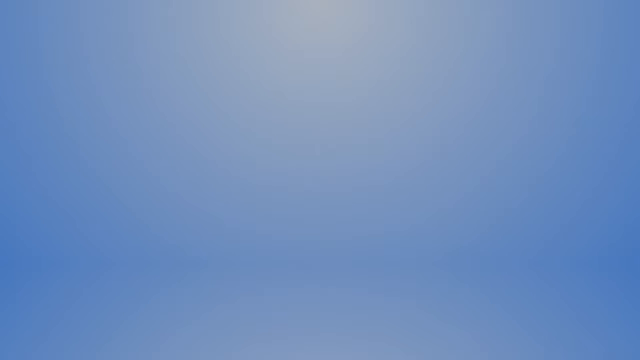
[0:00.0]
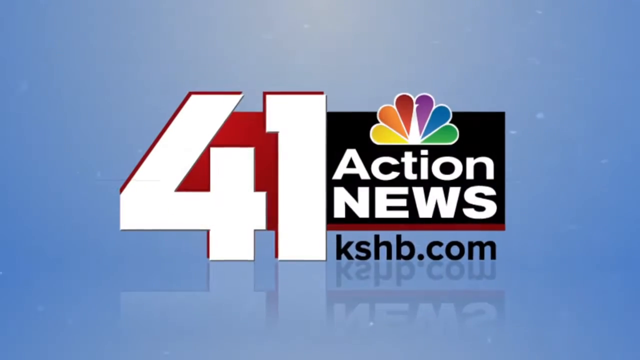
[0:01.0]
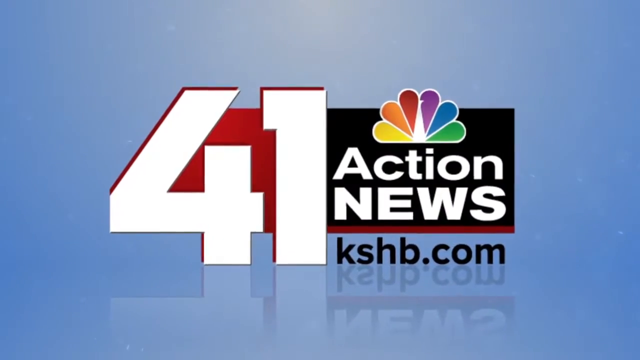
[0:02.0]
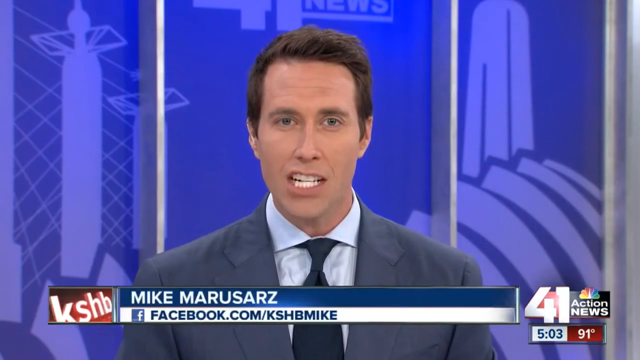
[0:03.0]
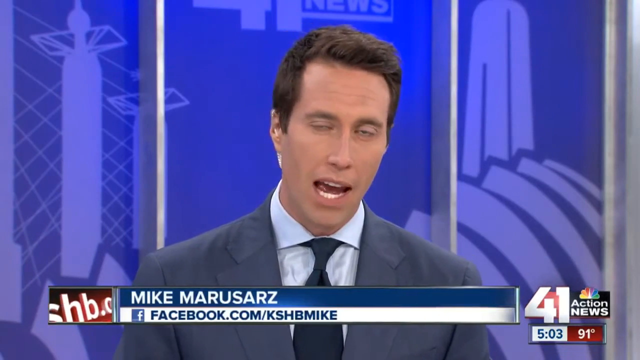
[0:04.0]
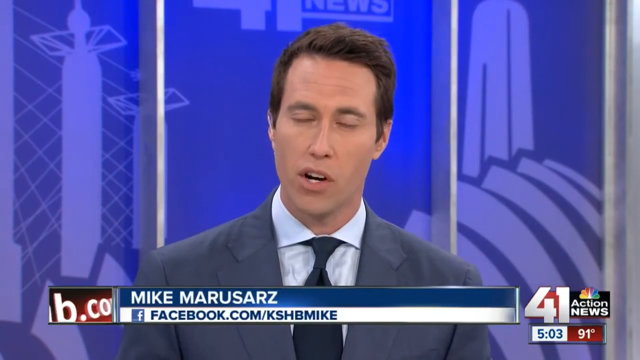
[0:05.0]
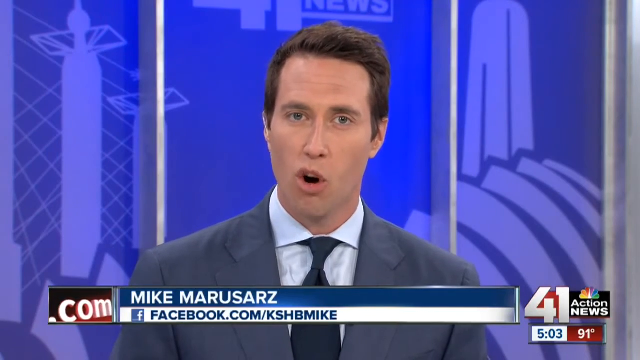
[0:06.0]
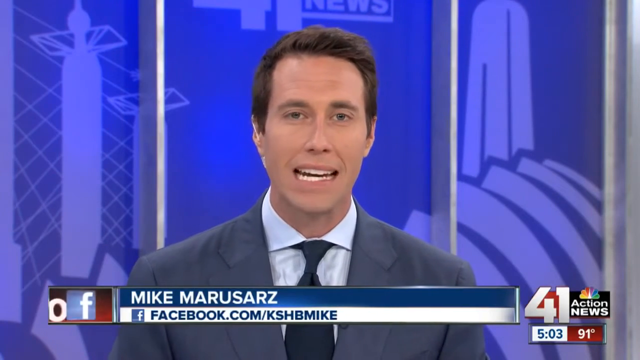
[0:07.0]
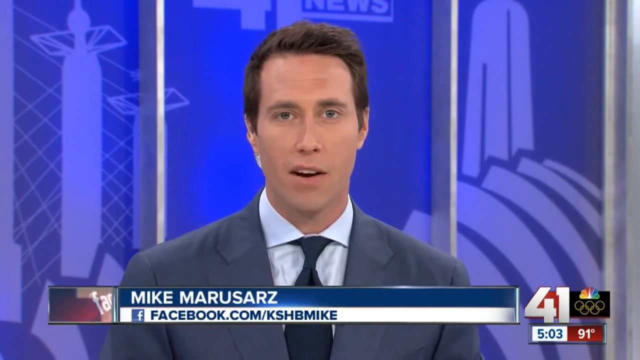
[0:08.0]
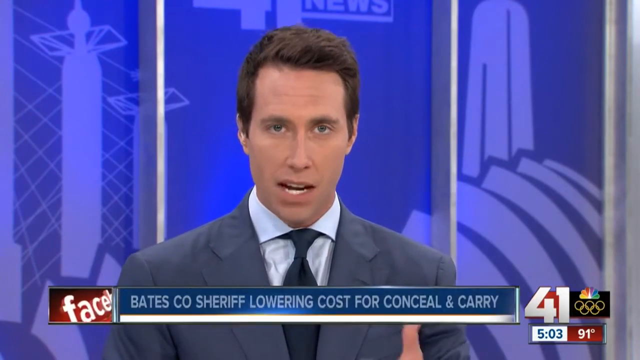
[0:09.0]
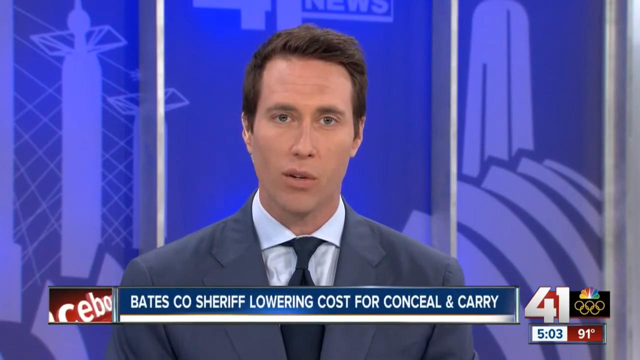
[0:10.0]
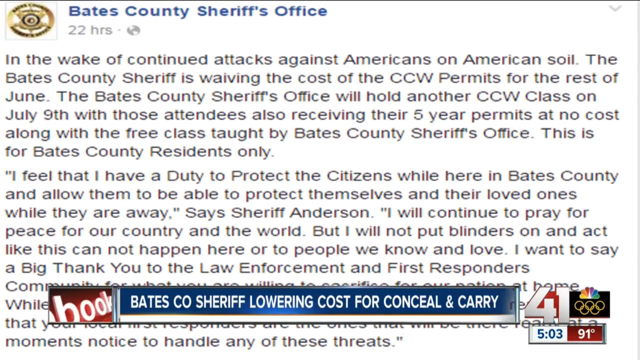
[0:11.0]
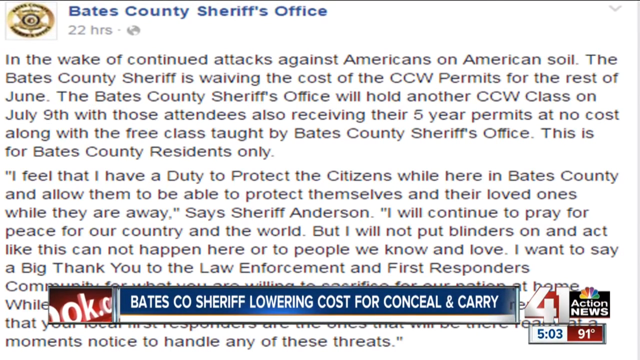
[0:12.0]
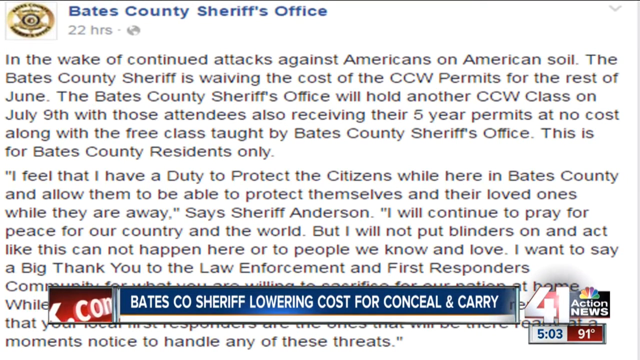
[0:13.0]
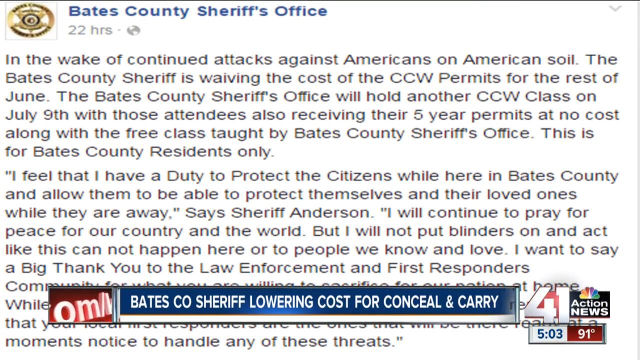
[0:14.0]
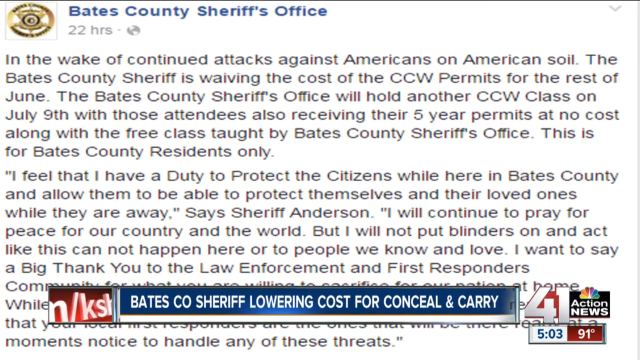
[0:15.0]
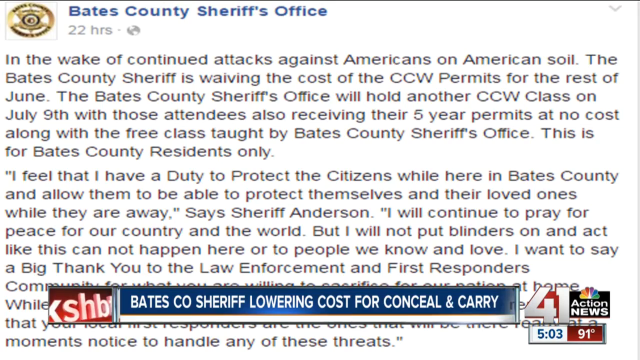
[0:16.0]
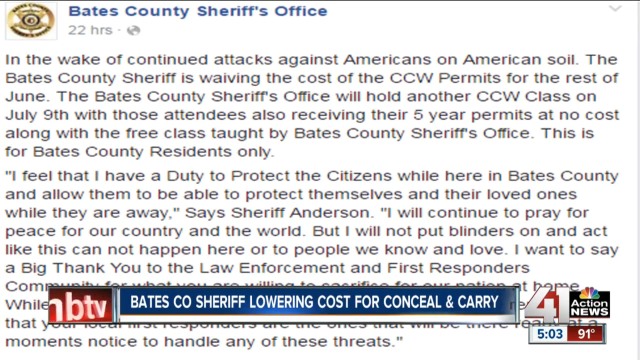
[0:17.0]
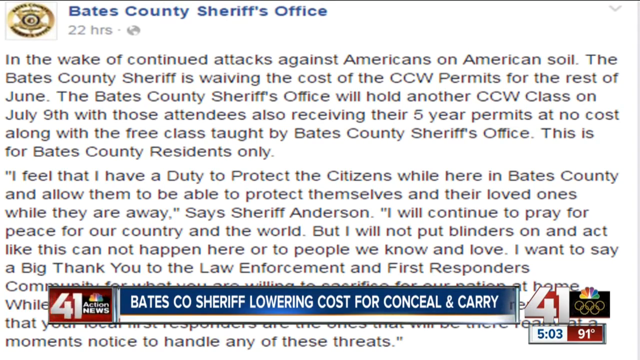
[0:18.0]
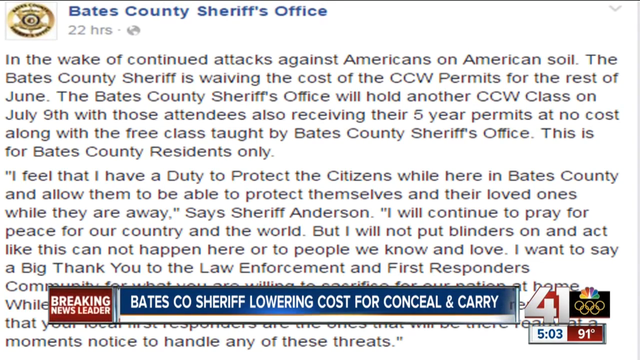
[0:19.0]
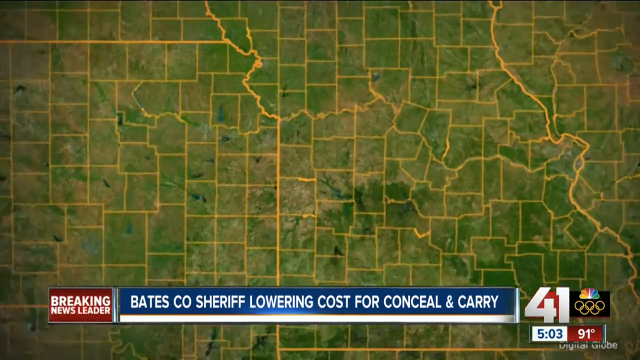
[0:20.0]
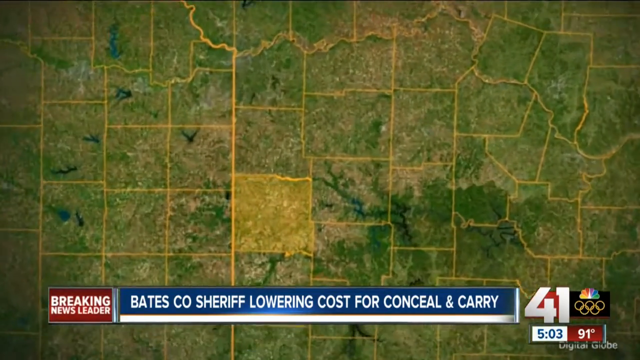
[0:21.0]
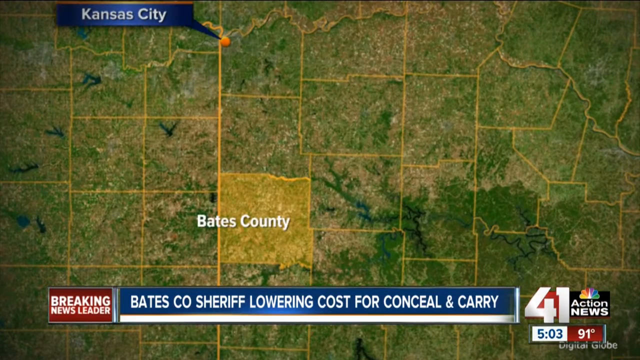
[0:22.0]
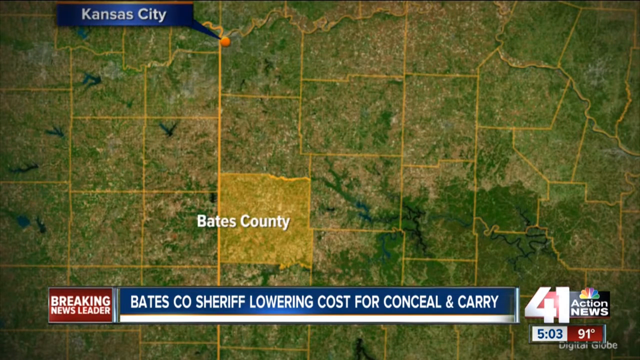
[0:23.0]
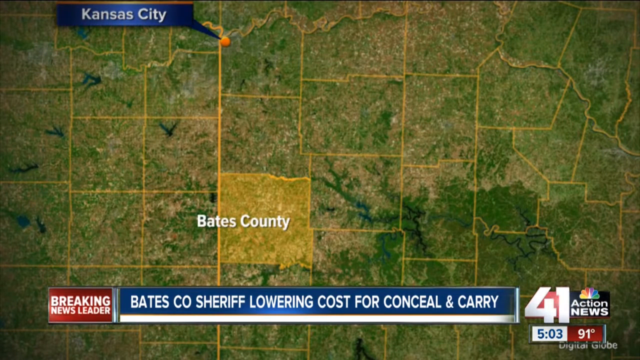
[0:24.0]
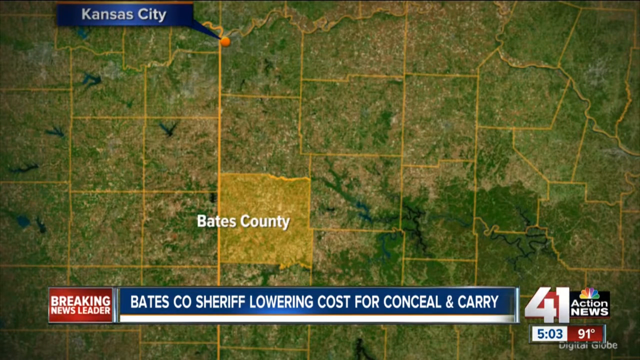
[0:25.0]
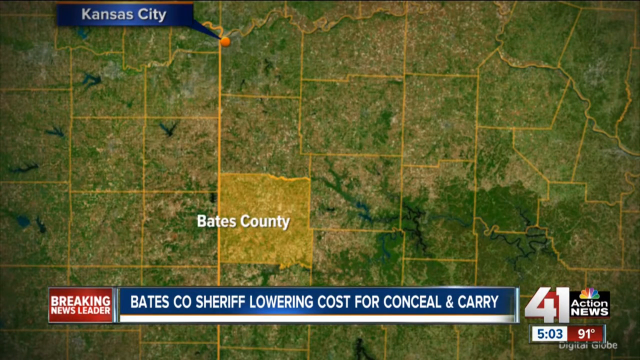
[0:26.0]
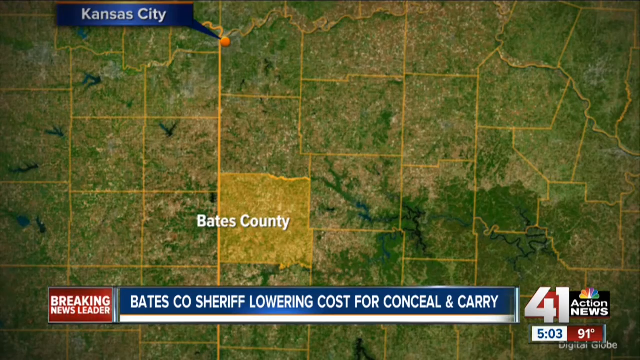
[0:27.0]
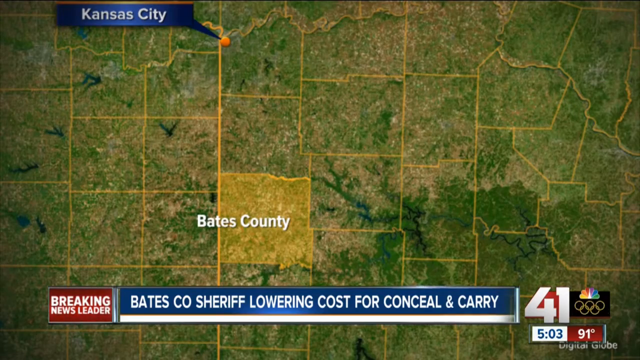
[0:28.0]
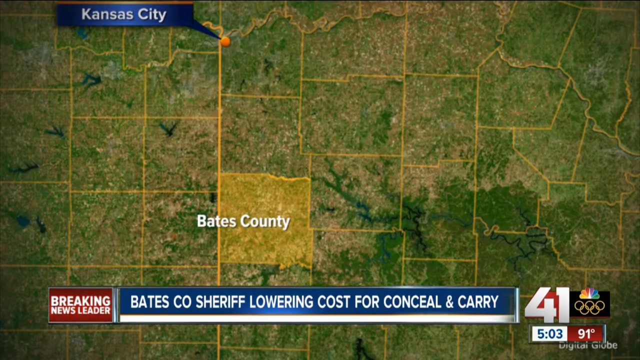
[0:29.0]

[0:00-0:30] The text "41 news" appears, and then "kshb.com" flashes on the screen. The video moves to a man whose name is shown as Mike Marusarz. He has short brown hair and wears a gray suit, a blue tie and a light shirt. He speaks and moves his head, with a backdrop behind him. Below him, text reads "Bates Co. Sheriff lowering cost for conceal and carry." The video then goes to a statement from the Bates County Sheriff's Office, and the text fills the screen, staying there for a while. Next comes a zoomed-in shot showing different counties, with Bates County highlighted in yellow. Above it, "Kansas City" is marked with a little dot. Other counties in the area are visible as well; the aerial shot covers quite a large area, with dozens of different counties shown.